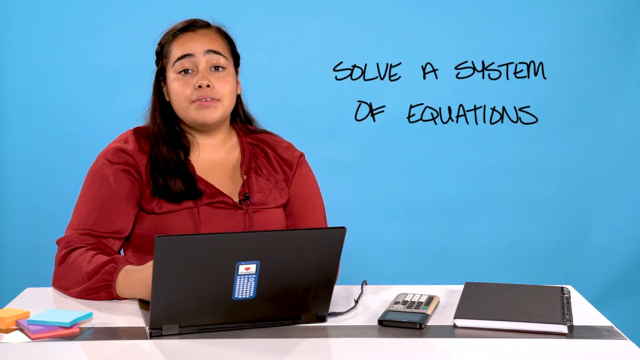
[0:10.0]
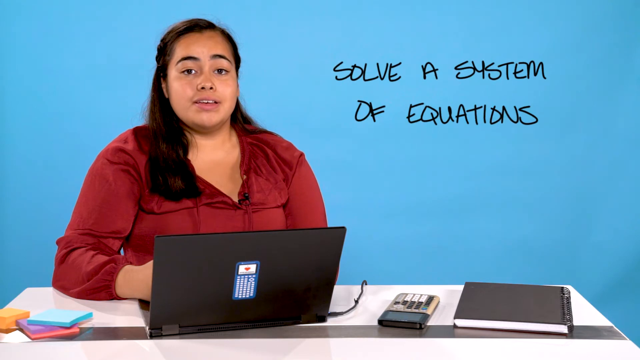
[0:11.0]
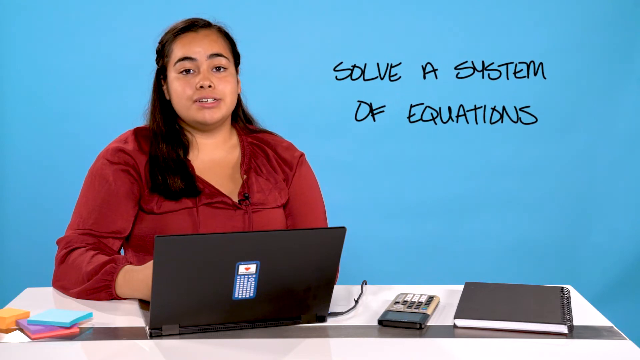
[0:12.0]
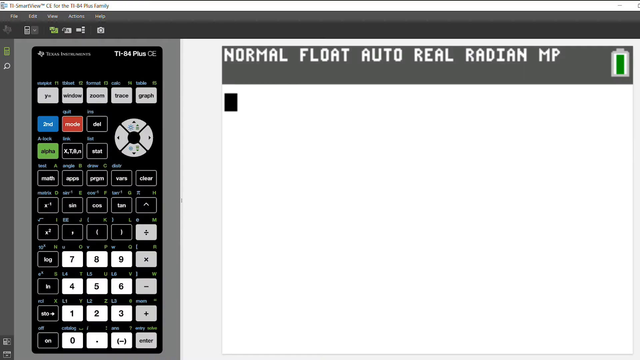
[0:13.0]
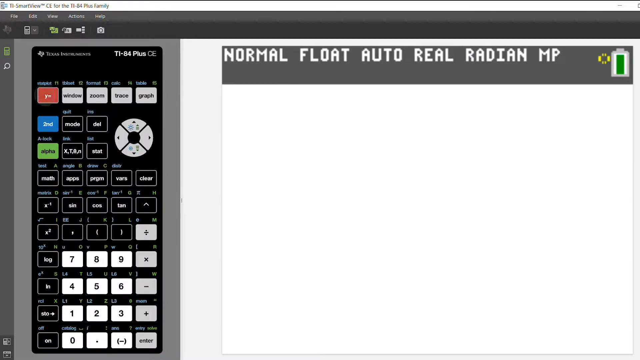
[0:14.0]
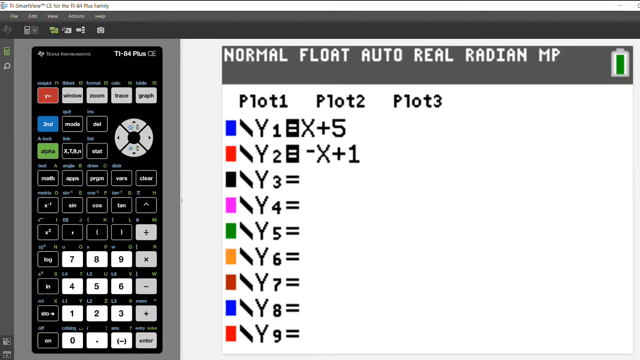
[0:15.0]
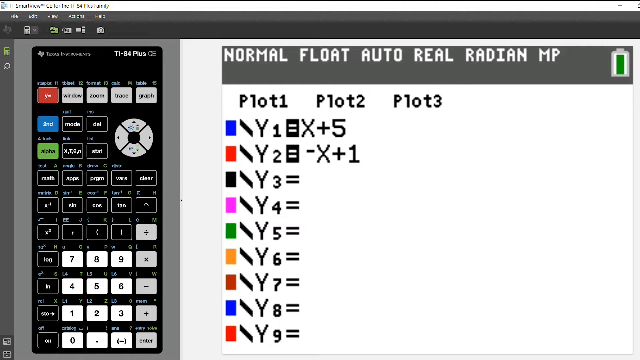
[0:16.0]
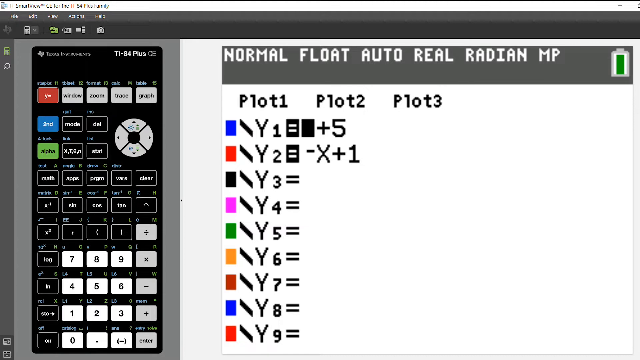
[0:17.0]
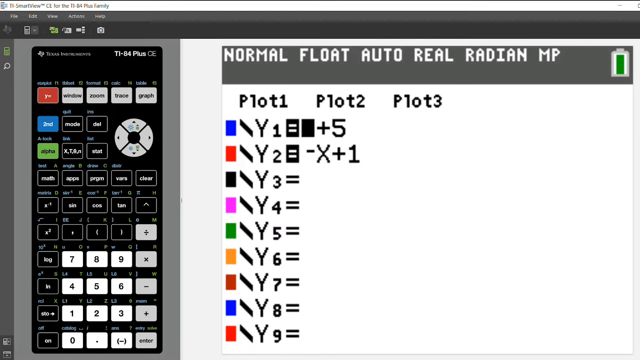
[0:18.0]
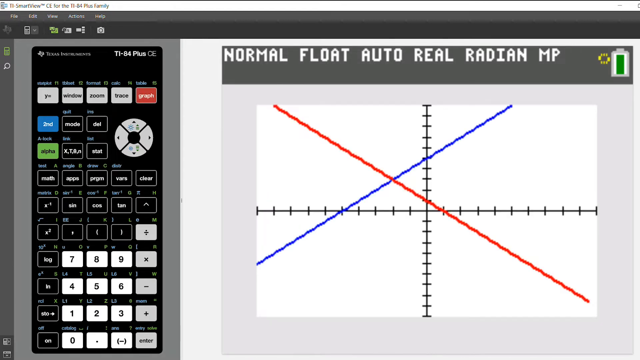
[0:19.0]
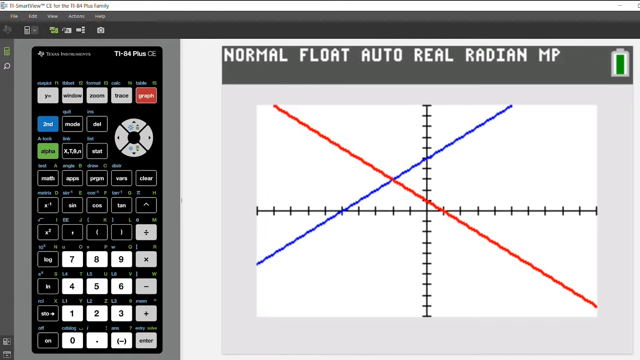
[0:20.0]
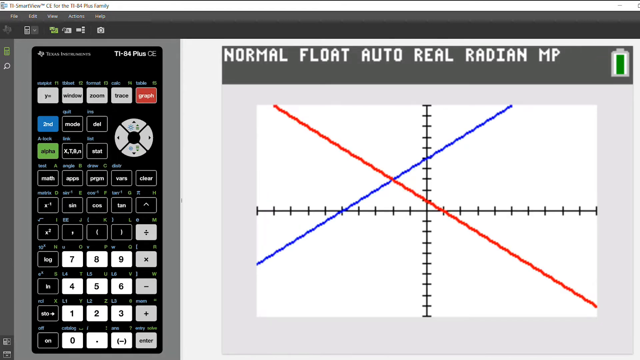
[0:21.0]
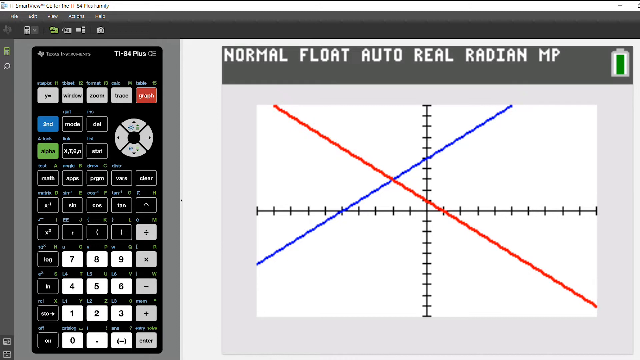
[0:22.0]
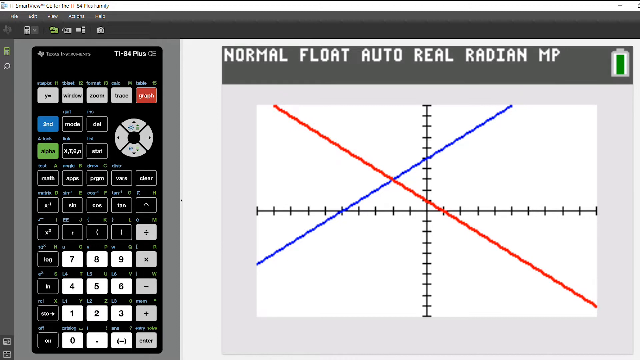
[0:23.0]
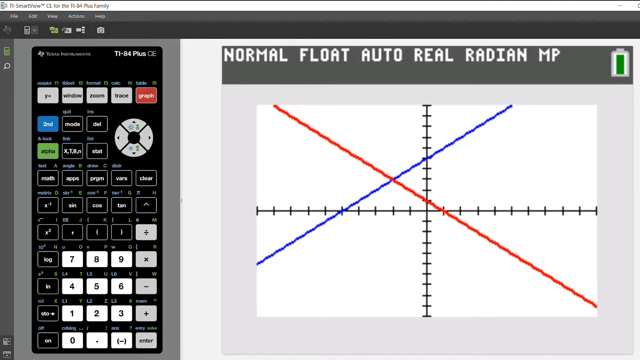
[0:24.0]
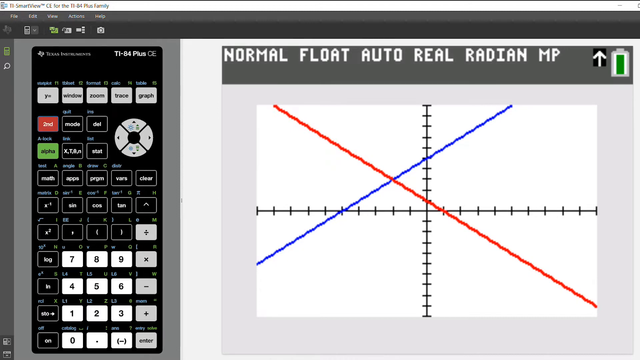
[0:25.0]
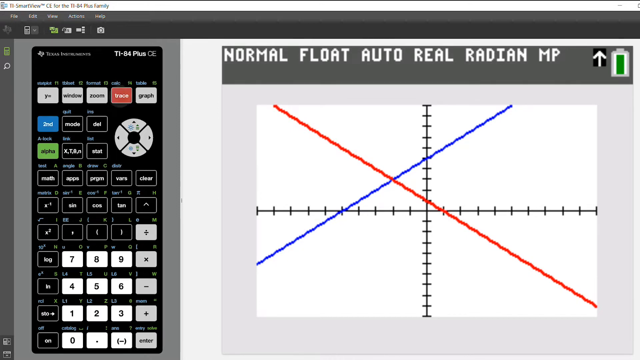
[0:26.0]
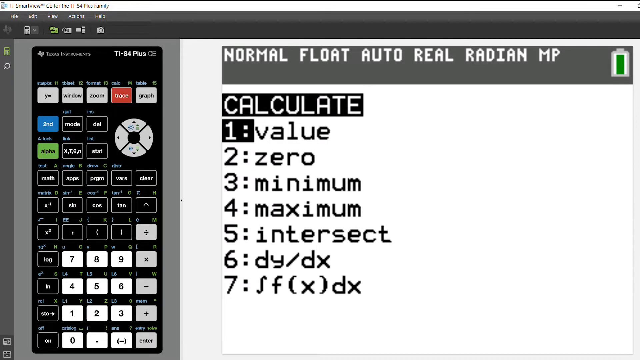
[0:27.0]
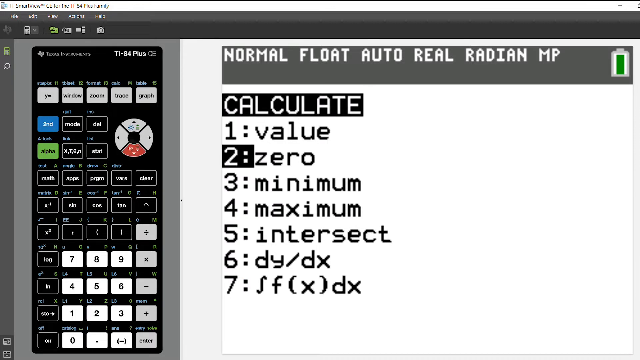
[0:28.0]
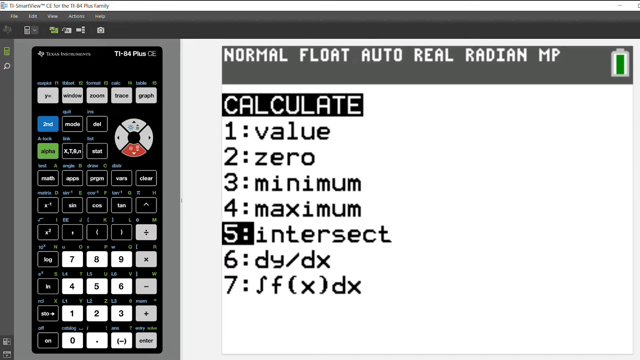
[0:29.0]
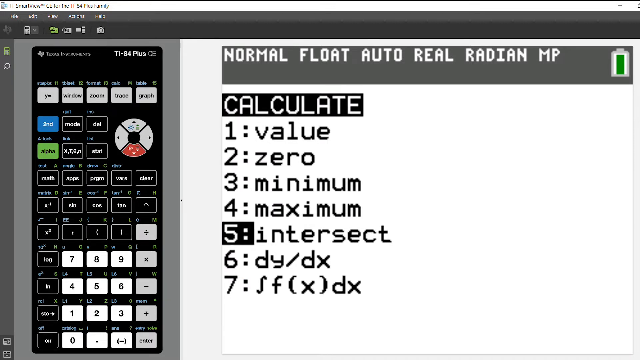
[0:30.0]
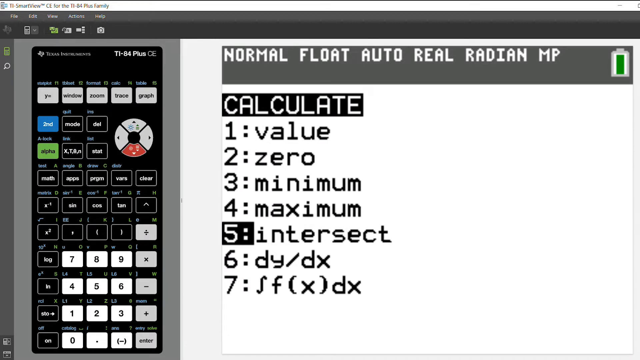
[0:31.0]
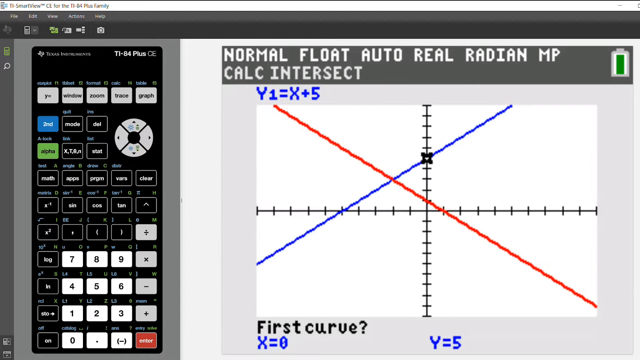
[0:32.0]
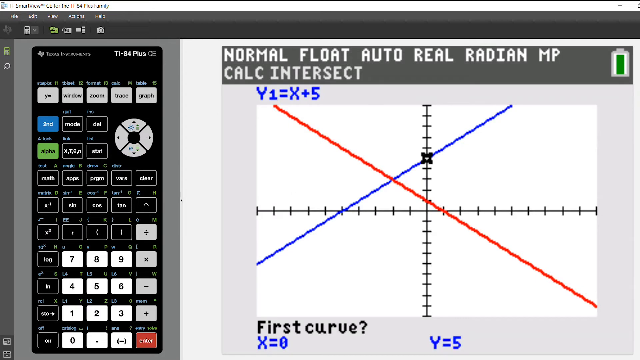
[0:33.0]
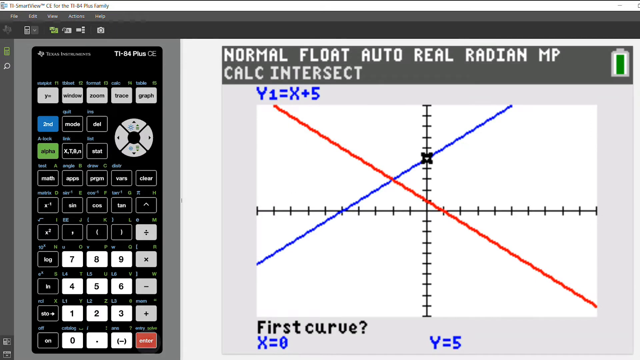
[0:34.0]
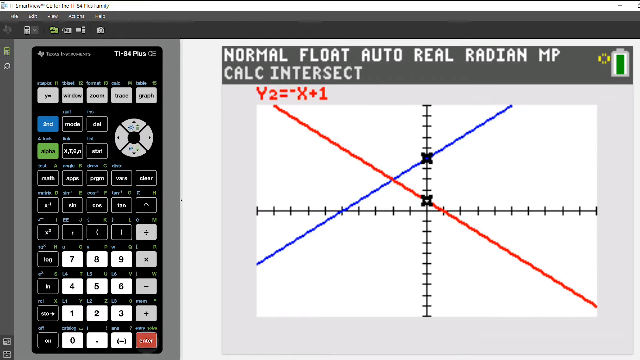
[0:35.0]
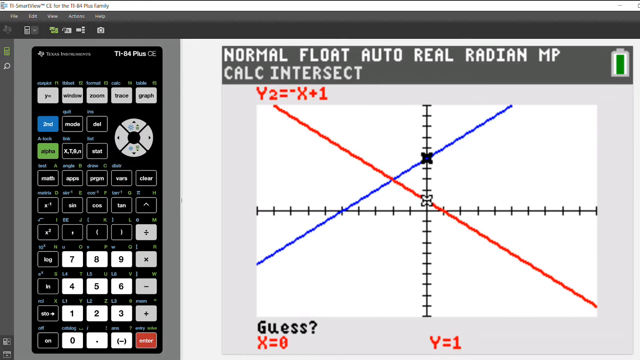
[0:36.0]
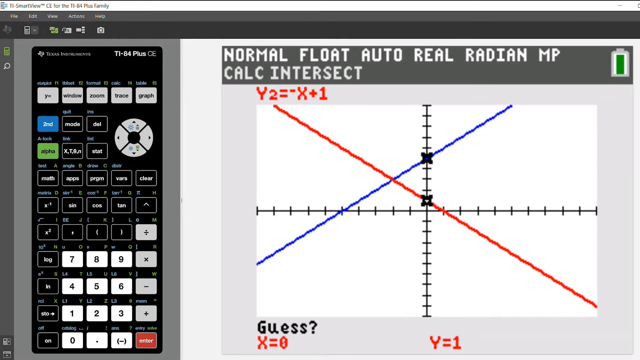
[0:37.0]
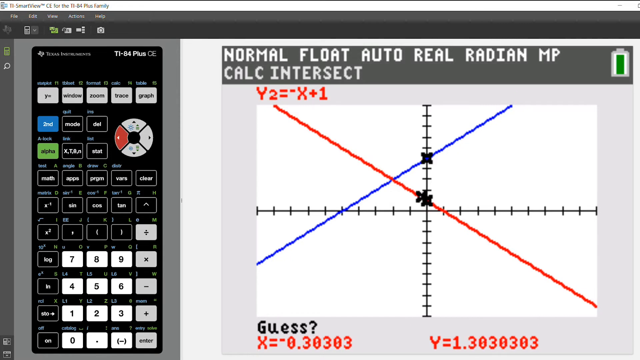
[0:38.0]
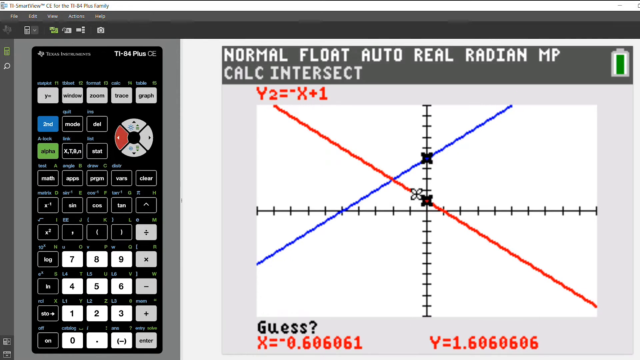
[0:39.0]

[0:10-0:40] The woman in the red long-sleeve shirt, a little heavier set, is on the left-hand side of the screen. The video flashes to a new screen showing a TI-84 Plus graphing calculator and what it can do: a graph with a blue line going from lower left to upper right, crossing a red line going from upper left to lower right. It then flashes back to the woman, who looks like she is probably Hispanic. There is a blue background behind her, and on it, at the top right of the screen, "solve a system of equations" is written in black. Her computer is straight in front of her. To her left, on the viewer's right, is a graphing calculator, and farther past it on a table is a notebook with a black cover. To her right, on the viewer's left, are post-it notes: a blue pad, a purple pad and an orange pad.